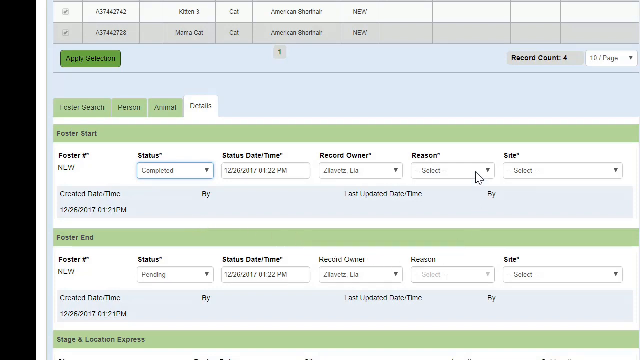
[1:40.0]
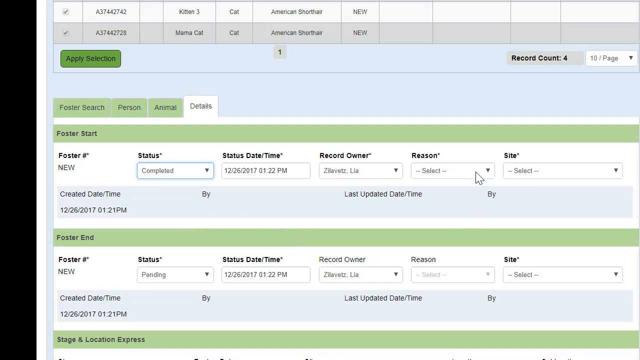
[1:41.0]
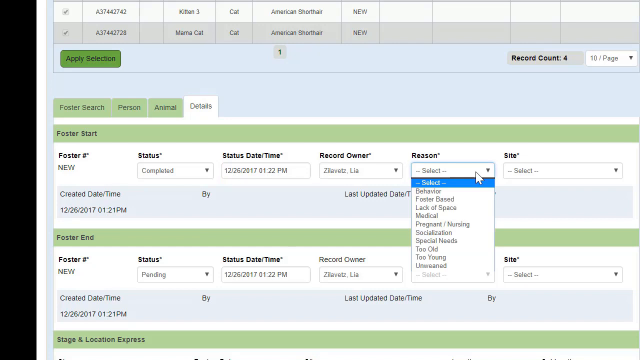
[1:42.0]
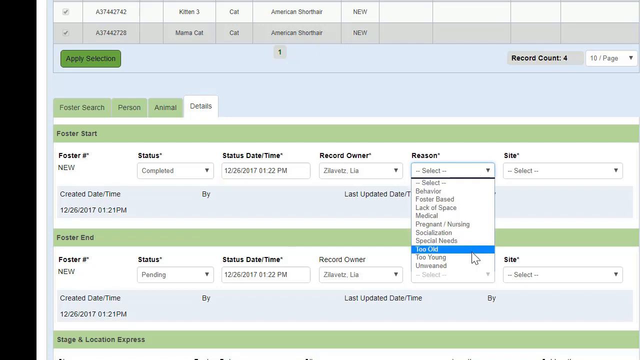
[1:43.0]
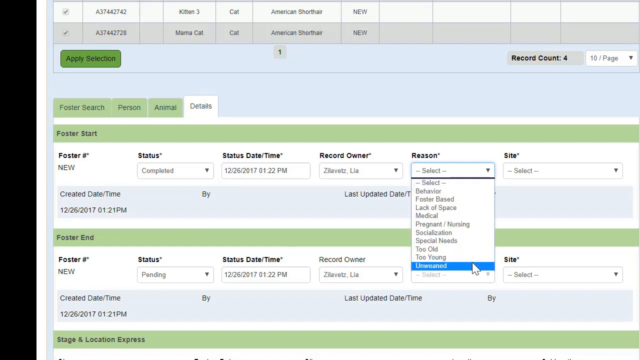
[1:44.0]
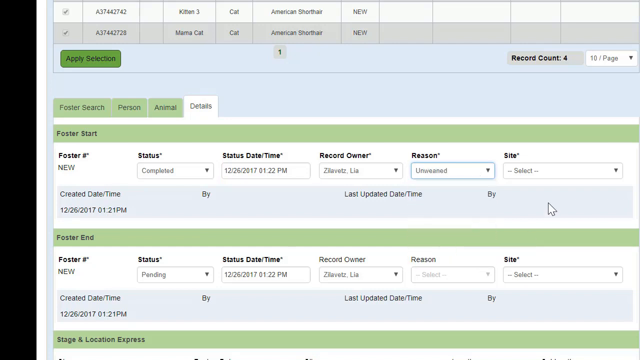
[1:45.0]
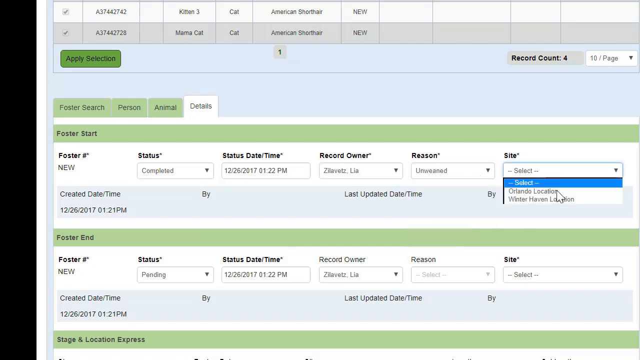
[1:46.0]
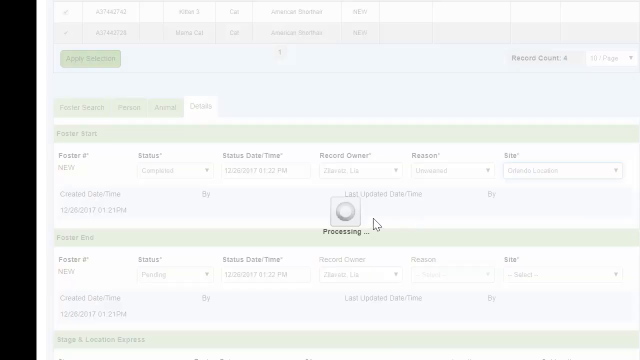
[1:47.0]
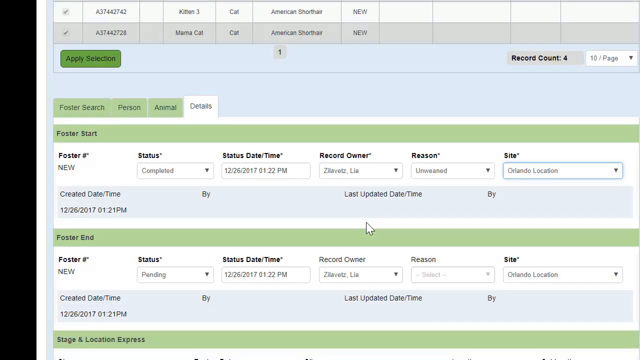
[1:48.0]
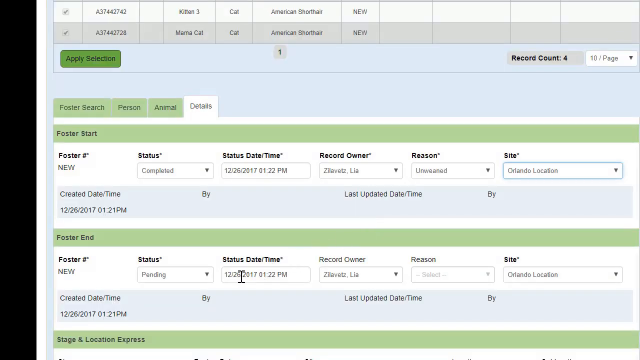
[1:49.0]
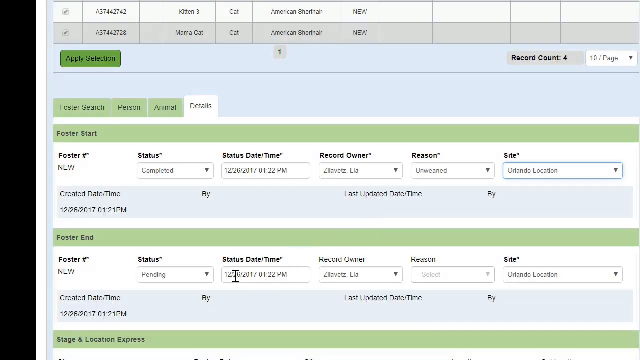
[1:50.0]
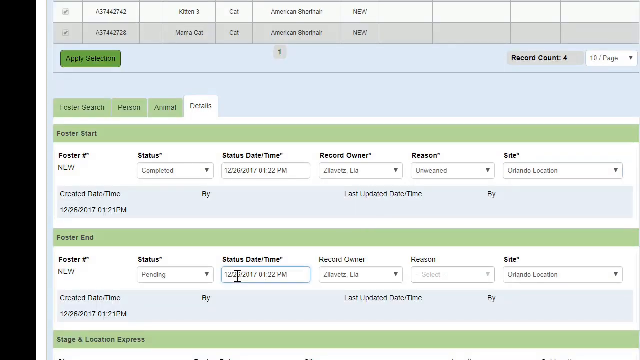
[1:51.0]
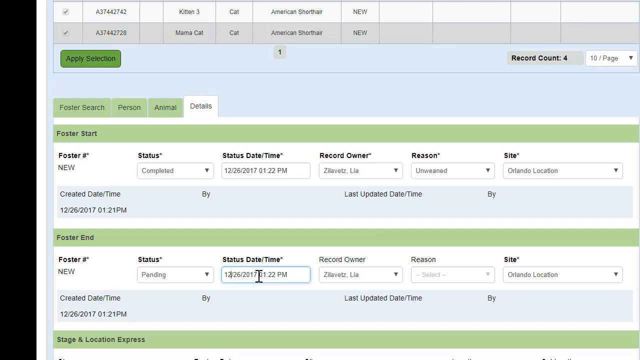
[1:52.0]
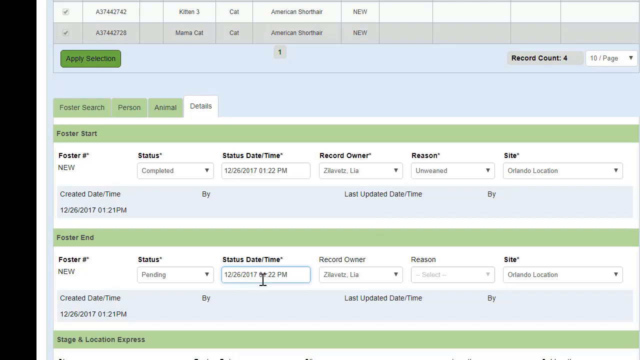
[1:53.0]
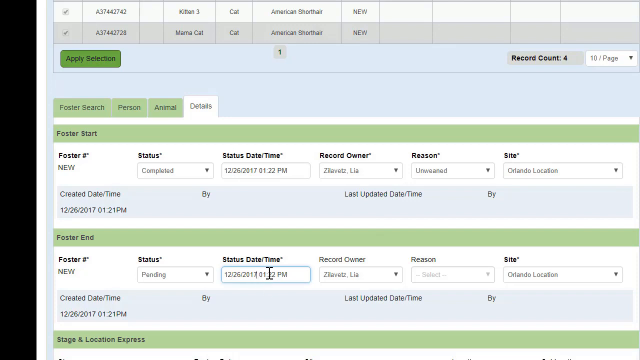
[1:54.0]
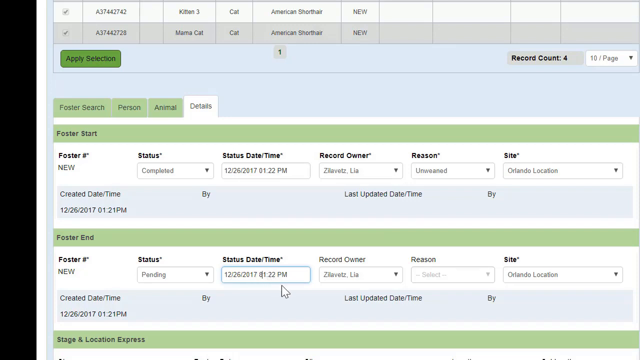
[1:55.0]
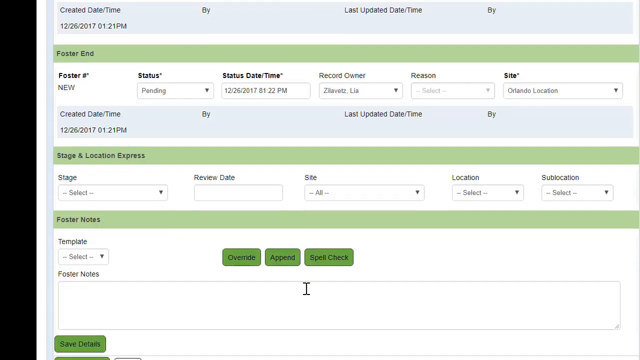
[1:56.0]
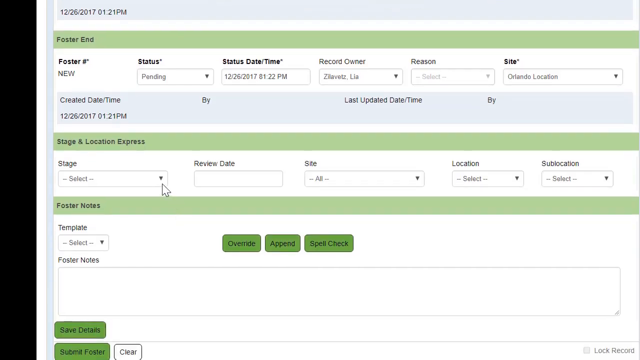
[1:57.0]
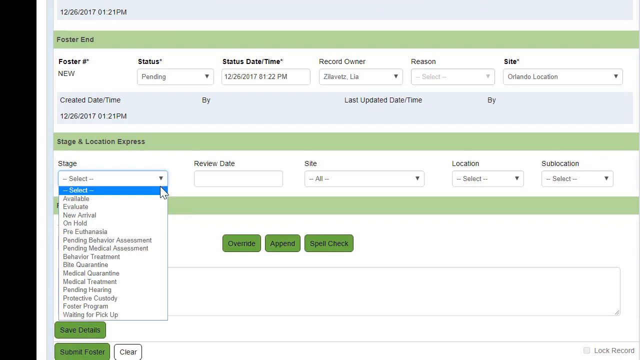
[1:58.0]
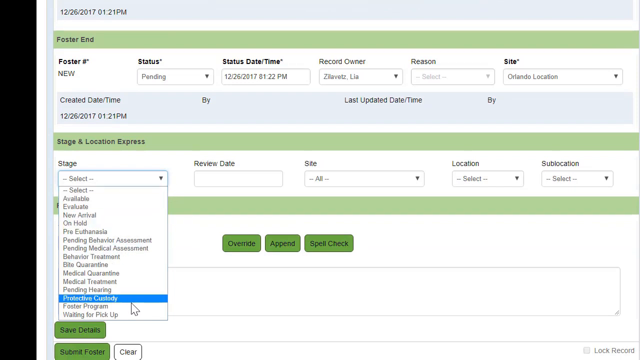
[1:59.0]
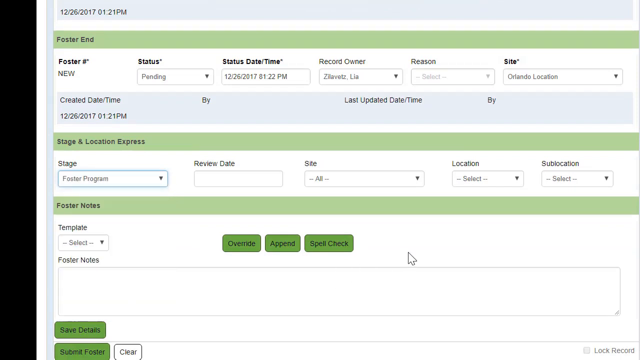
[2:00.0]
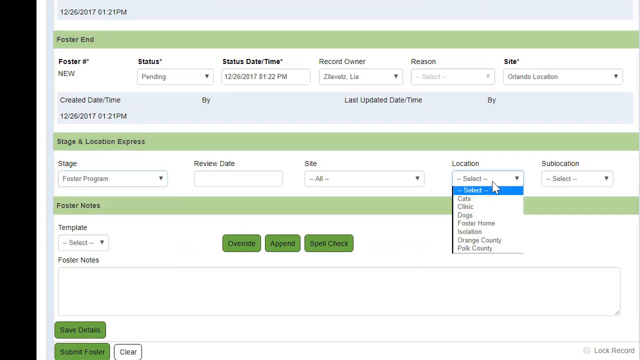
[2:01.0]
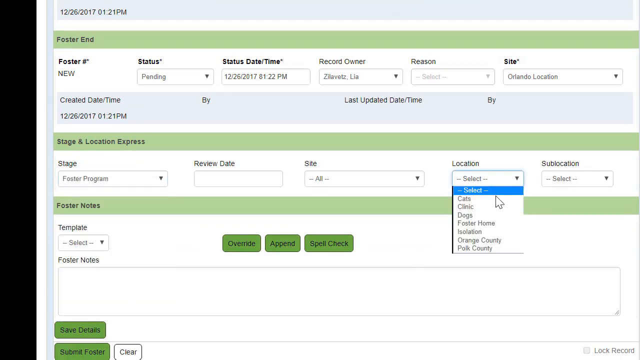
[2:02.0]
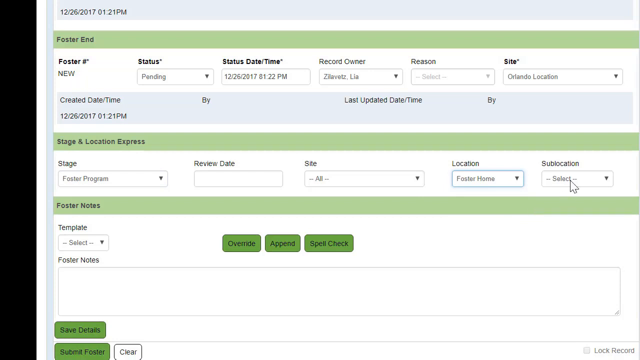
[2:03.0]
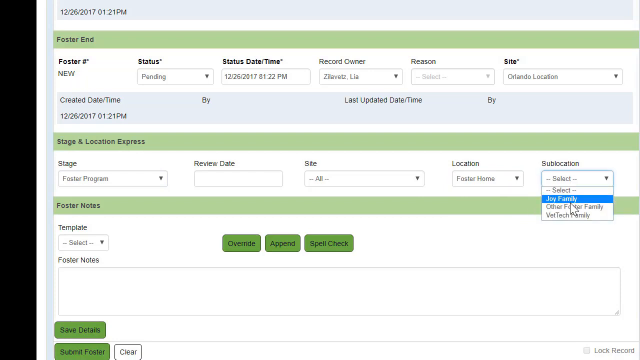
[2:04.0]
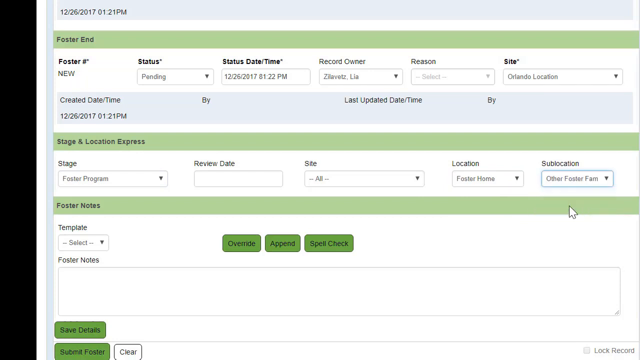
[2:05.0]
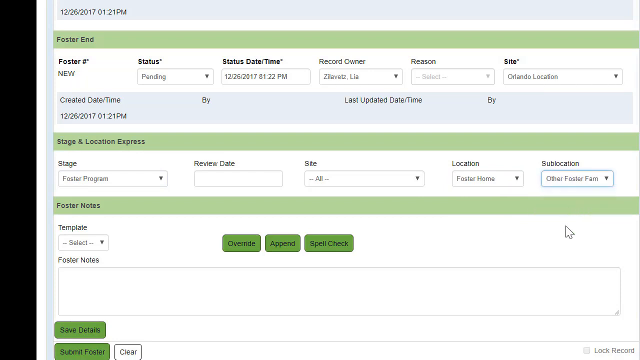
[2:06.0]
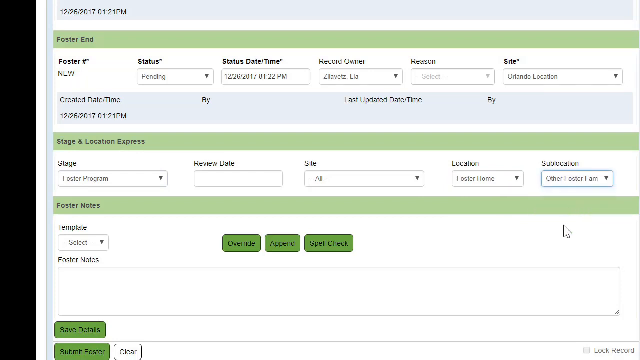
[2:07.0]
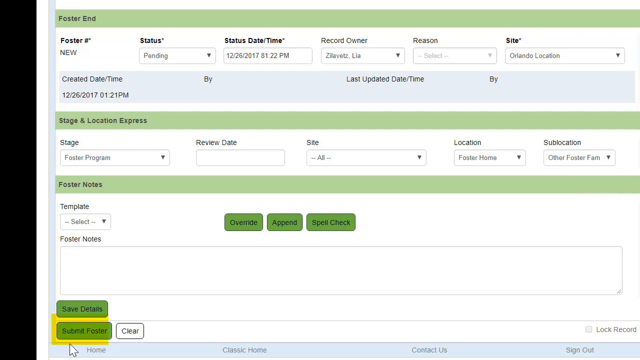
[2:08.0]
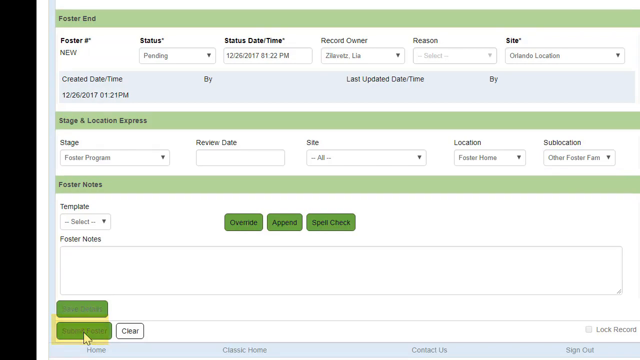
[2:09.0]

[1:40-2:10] The details panels for Foster Start and Foster End times are shown. In the top Foster Start panel, the cursor clicks the drop-down menu under Reason and selects the option "unweaned," then clicks the drop-down menu under Site and selects the Orlando location. The page reloads somewhat, so it looks like these options are saved. In the Foster End panel underneath, in the text input box for status date/time, the user changes the time from 01:22pm to 81:22pm. The user then scrolls down and clicks the Stage drop-down menu in the Stage and Location Express panel and selects "Foster Program," then selects "Foster Home" from the Location drop-down in the same panel and "Other Foster Family" from the Sublocation drop-down. On the bottom left side of the page, the Submit Foster button is highlighted in yellow, and the cursor clicks it, bringing up the profile page for animal ID A37442737 with all of the specifications and information related to the fostering of this animal.